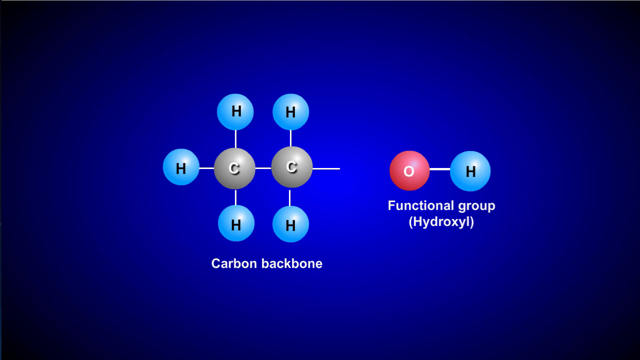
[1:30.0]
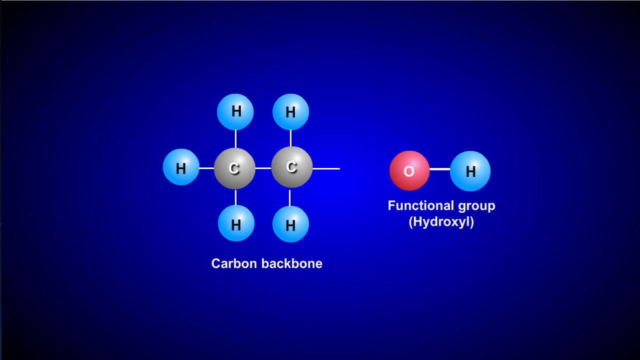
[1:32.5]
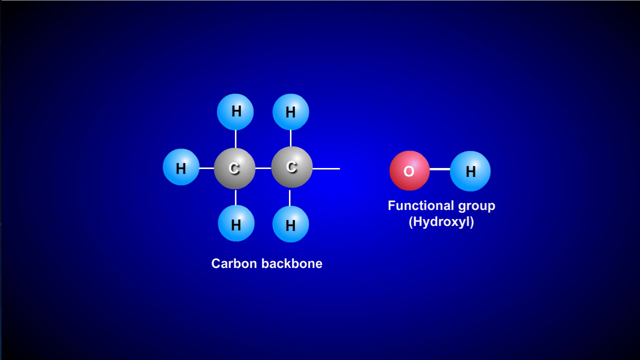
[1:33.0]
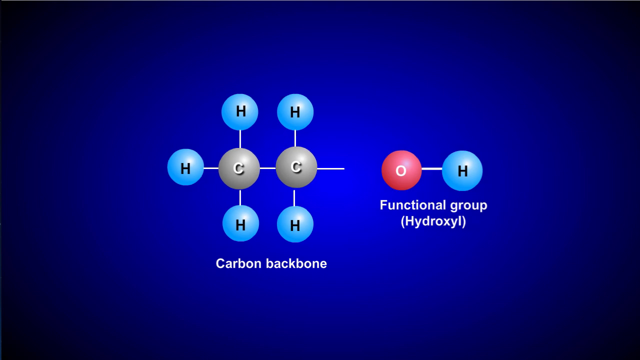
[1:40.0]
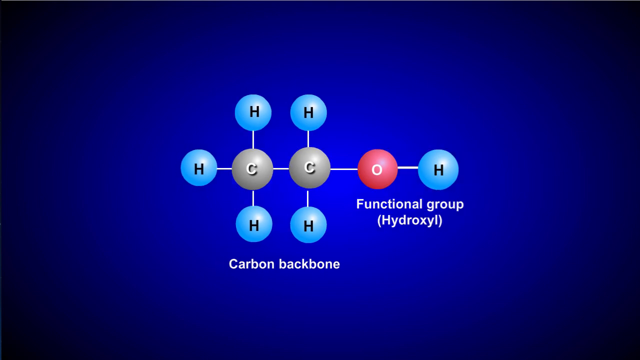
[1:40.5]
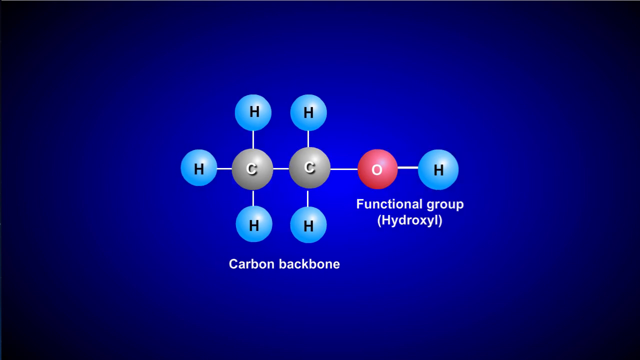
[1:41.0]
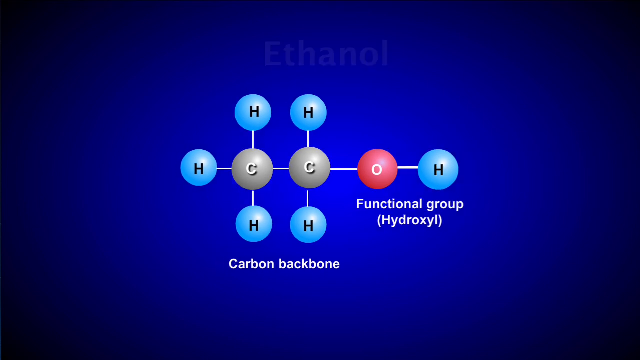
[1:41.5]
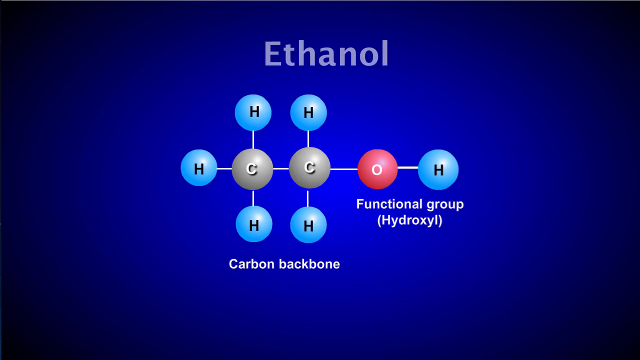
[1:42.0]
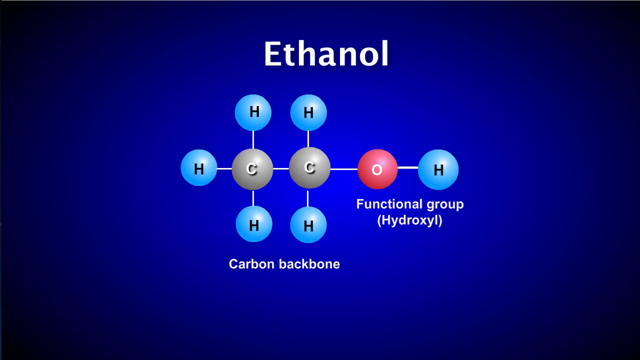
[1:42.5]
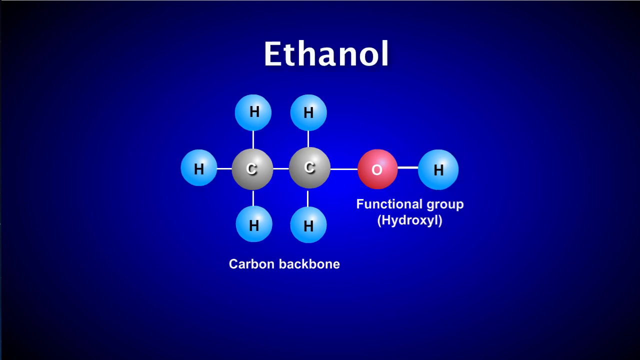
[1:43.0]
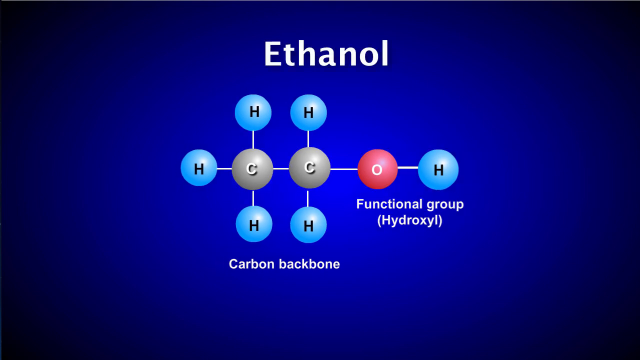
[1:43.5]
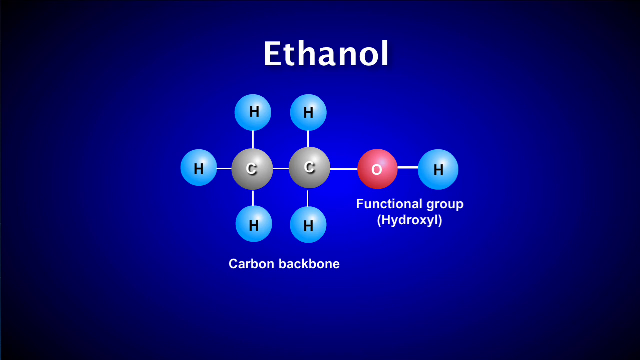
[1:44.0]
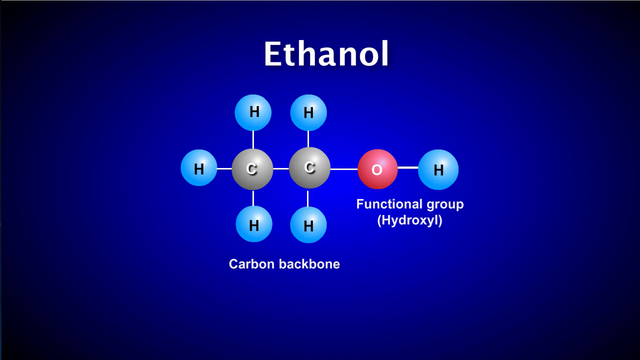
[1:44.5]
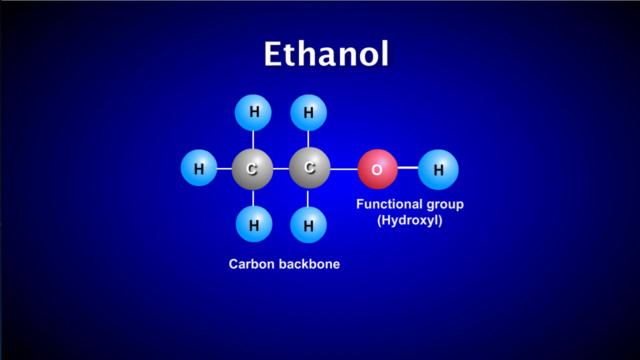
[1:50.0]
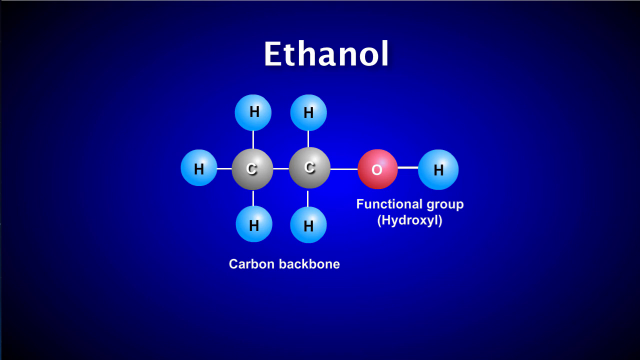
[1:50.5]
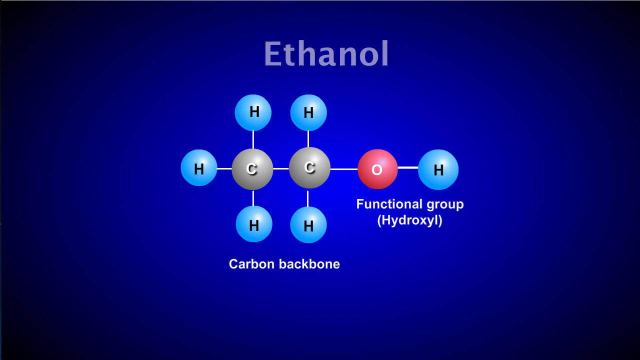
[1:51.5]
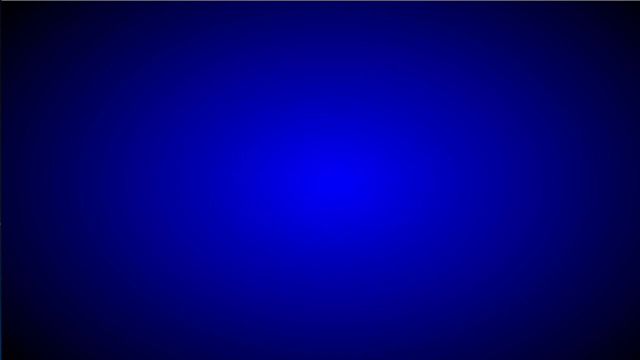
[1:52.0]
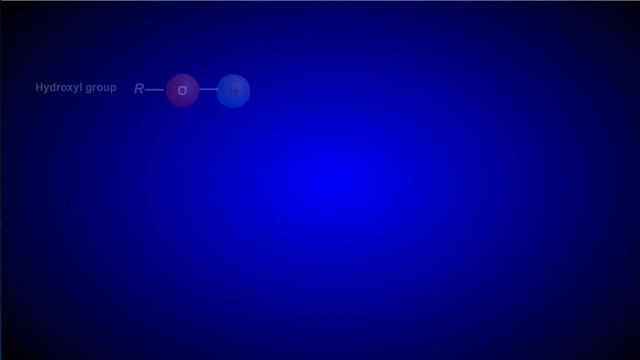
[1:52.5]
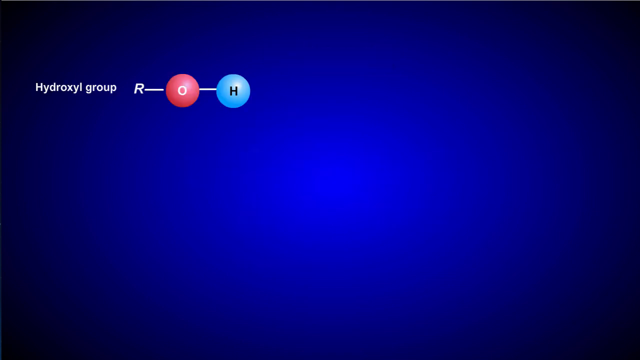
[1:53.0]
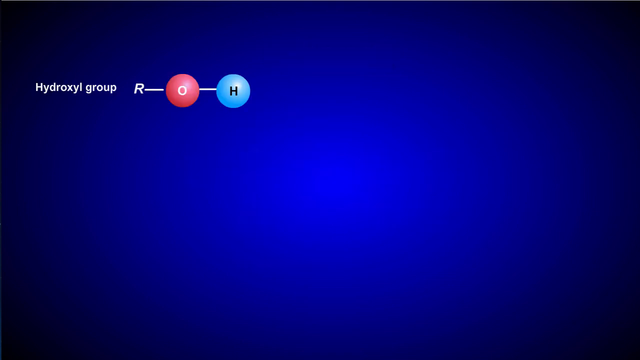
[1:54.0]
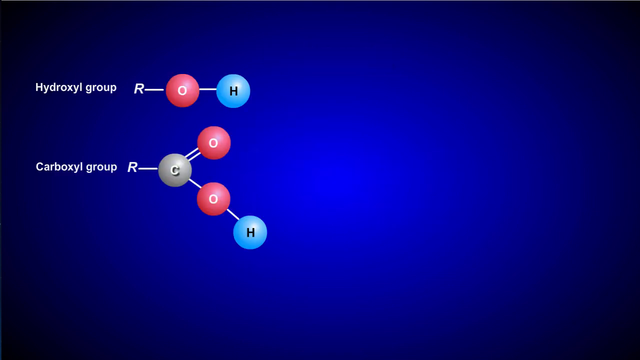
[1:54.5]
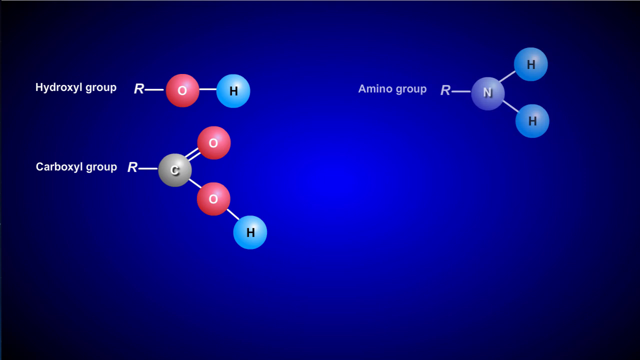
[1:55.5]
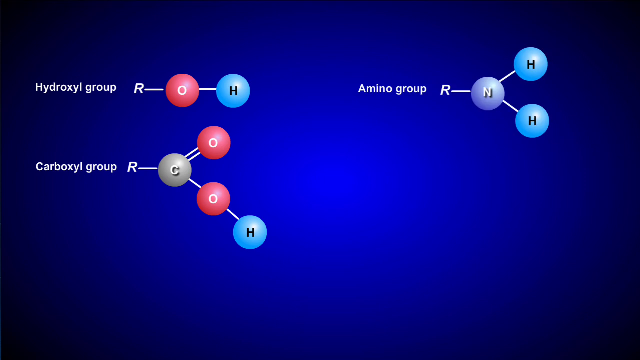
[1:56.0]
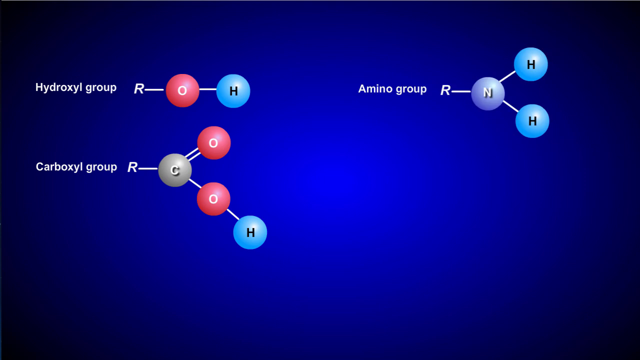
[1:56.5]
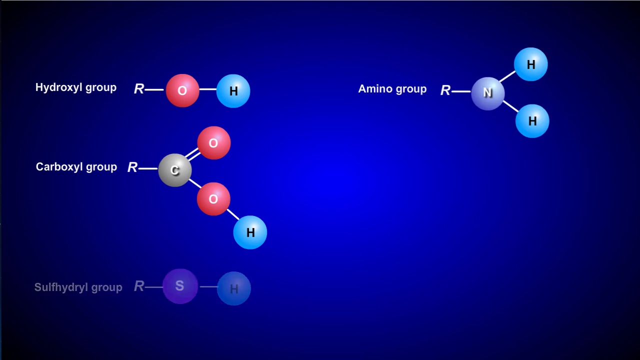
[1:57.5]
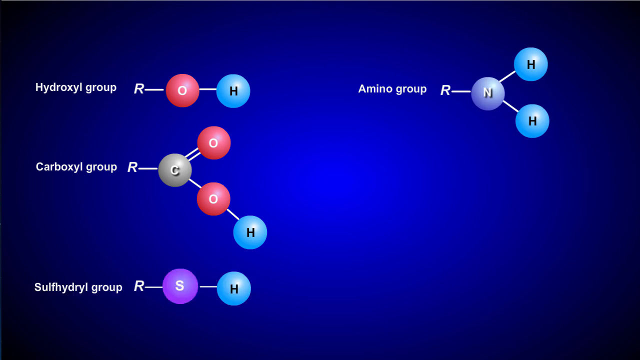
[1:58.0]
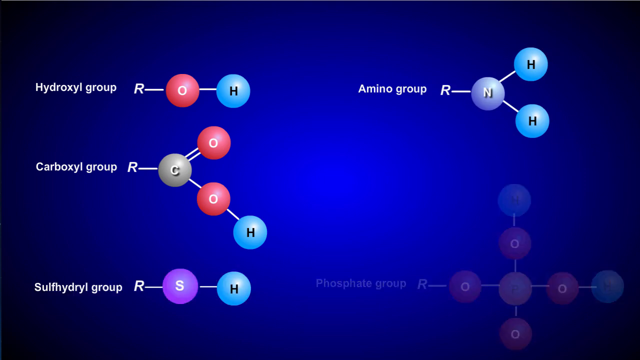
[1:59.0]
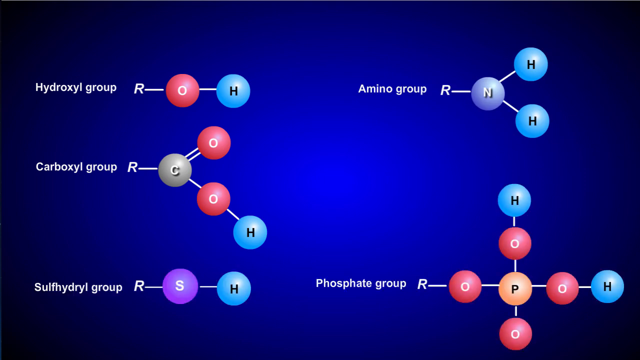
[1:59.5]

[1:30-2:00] A cartoon diagram shows two types of molecules, one with a carbon backbone and the other with a functional hydroxyl group, joining together at what appears to be an oxygen molecule; the result is called ethanol. The hydroxyl group has an oxygen and a hydrogen, and the carboxyl group has a carbon, two oxygens and a hydrogen; they come together, connecting and clicking to form a new group and a new molecule.